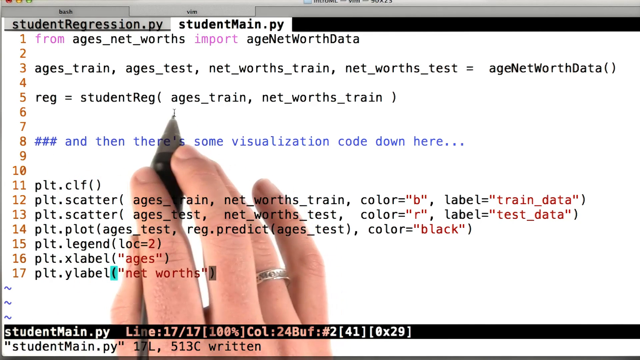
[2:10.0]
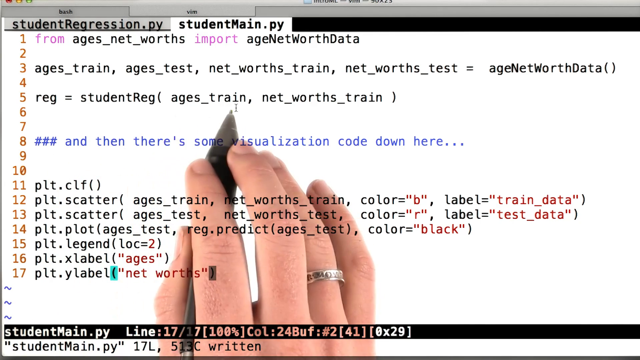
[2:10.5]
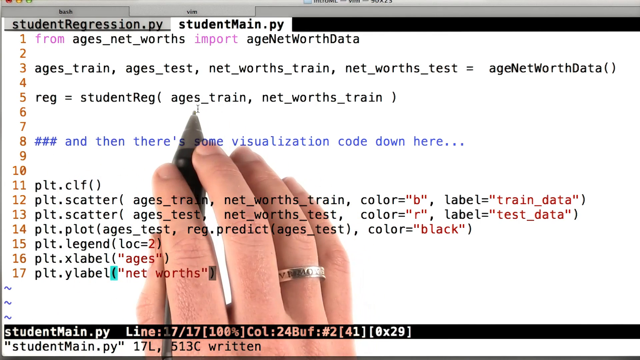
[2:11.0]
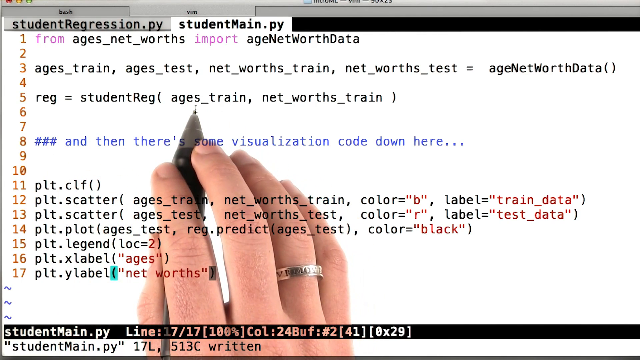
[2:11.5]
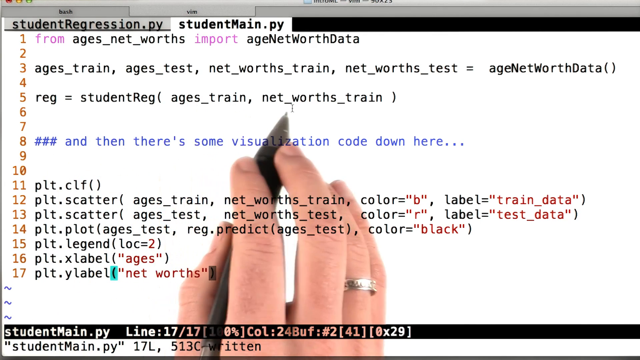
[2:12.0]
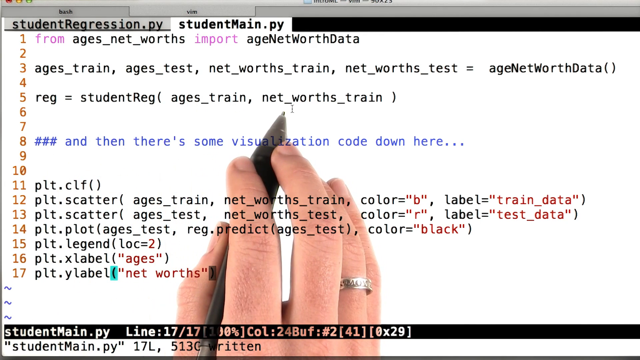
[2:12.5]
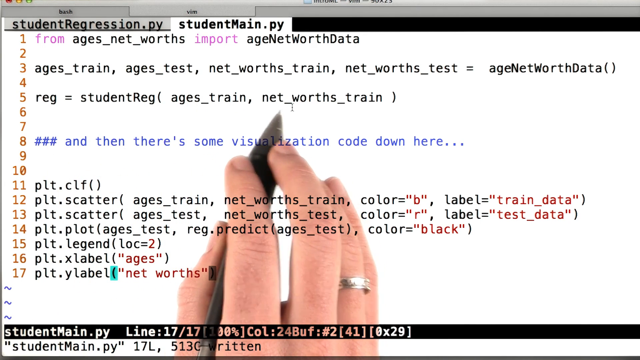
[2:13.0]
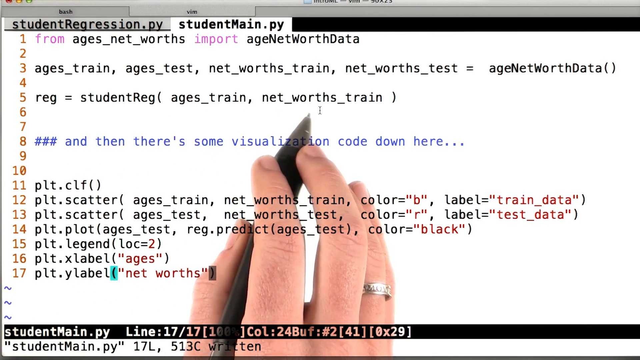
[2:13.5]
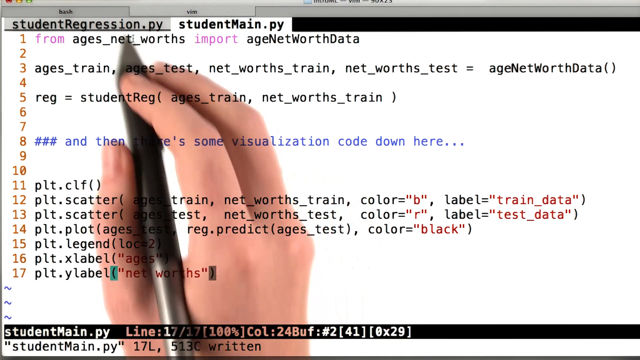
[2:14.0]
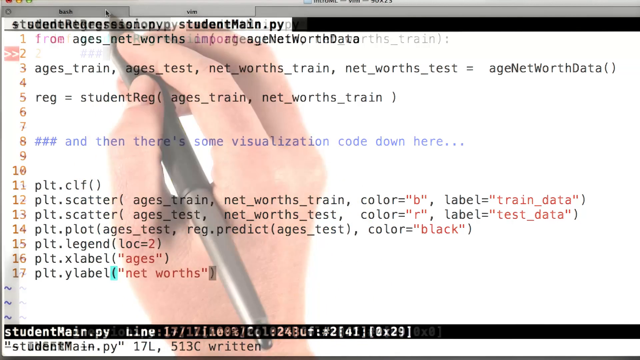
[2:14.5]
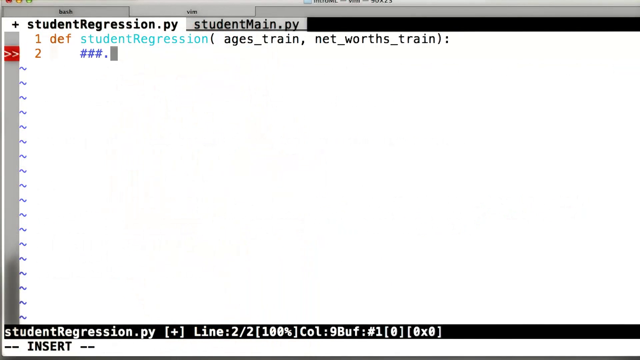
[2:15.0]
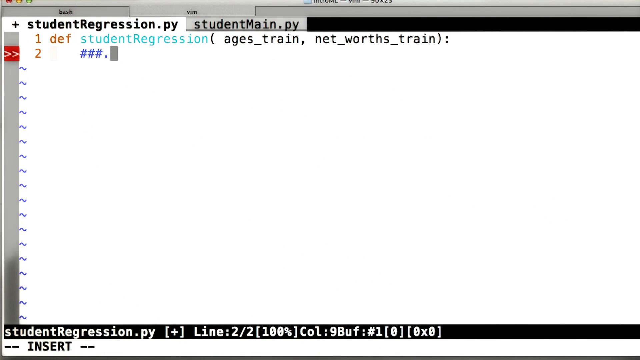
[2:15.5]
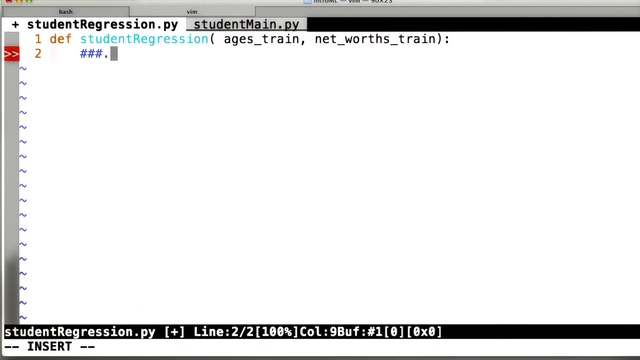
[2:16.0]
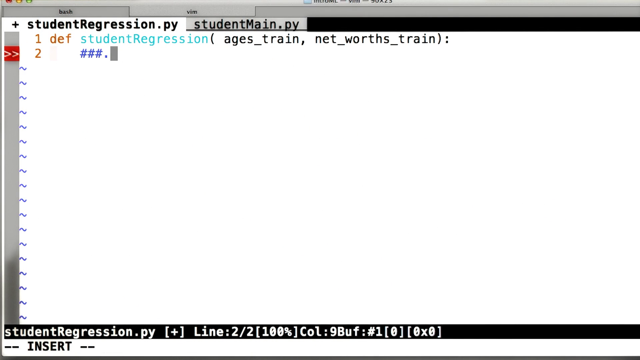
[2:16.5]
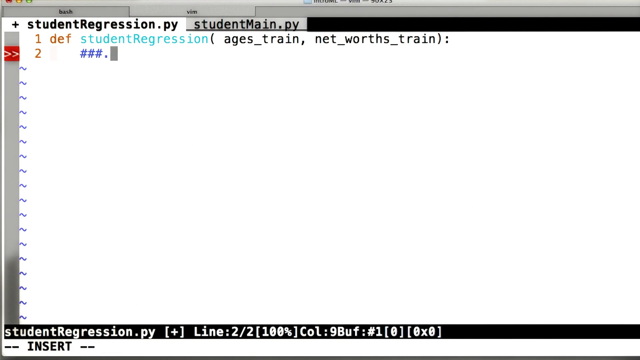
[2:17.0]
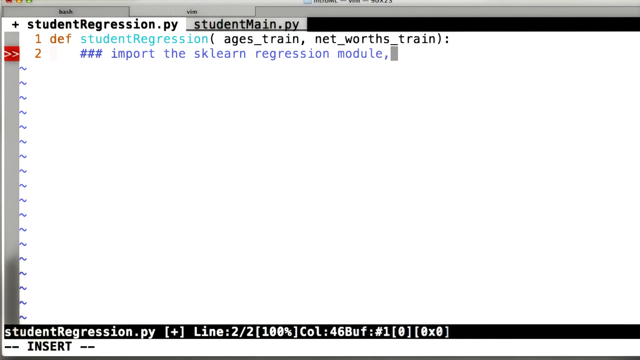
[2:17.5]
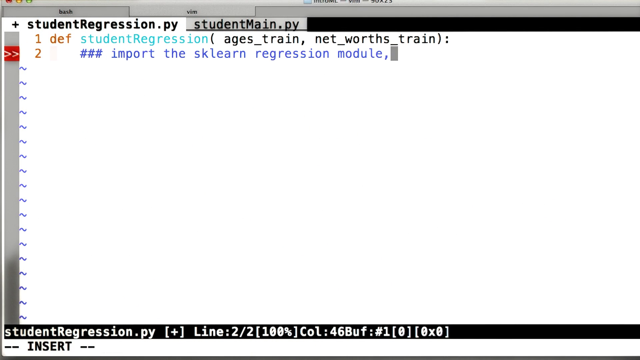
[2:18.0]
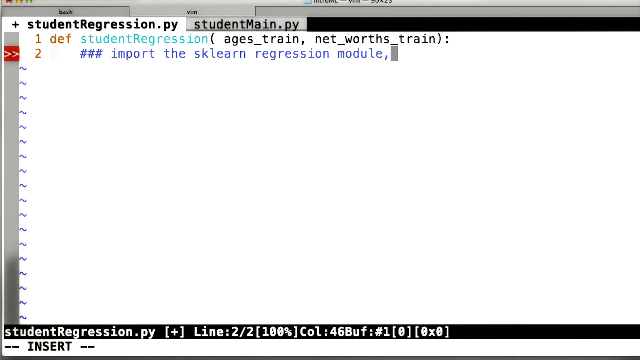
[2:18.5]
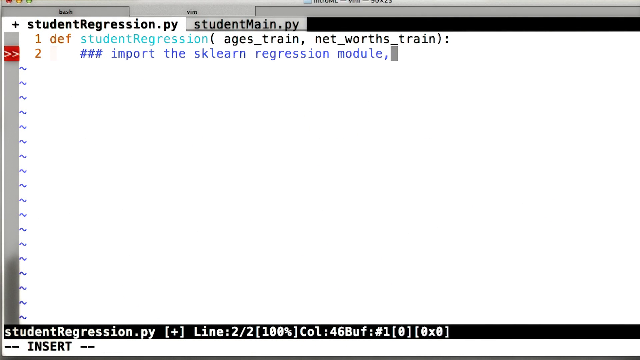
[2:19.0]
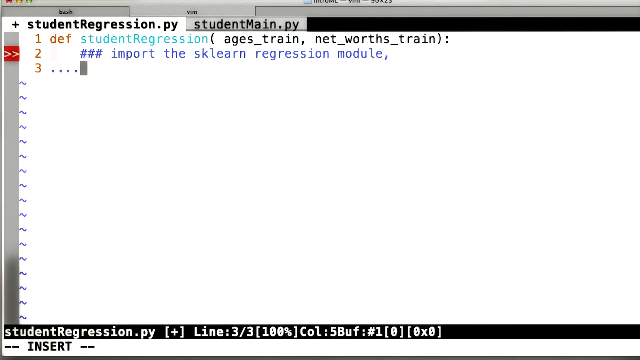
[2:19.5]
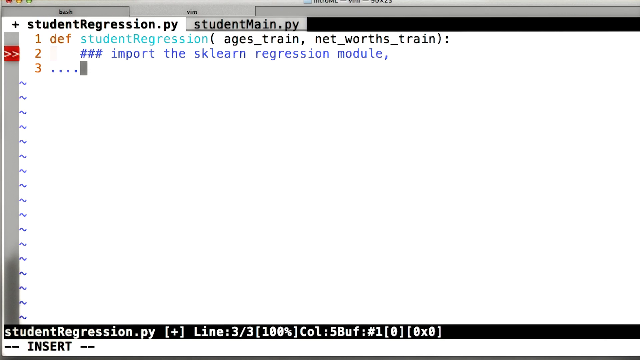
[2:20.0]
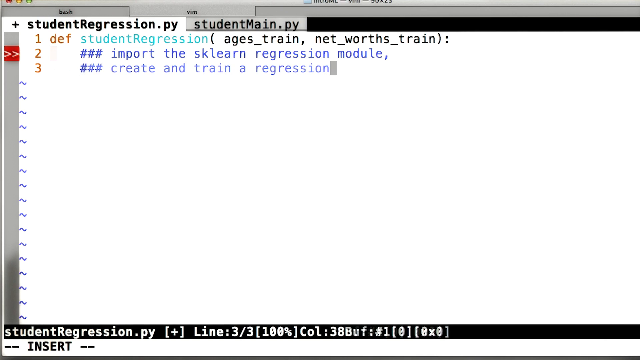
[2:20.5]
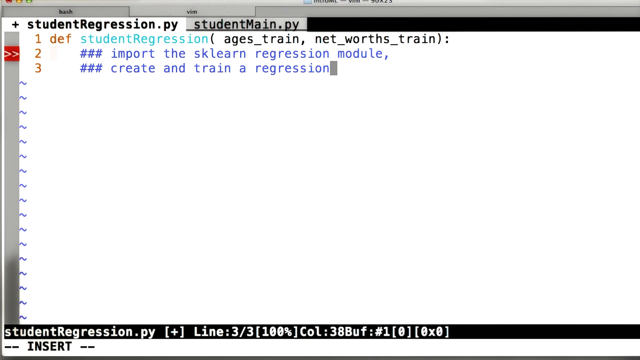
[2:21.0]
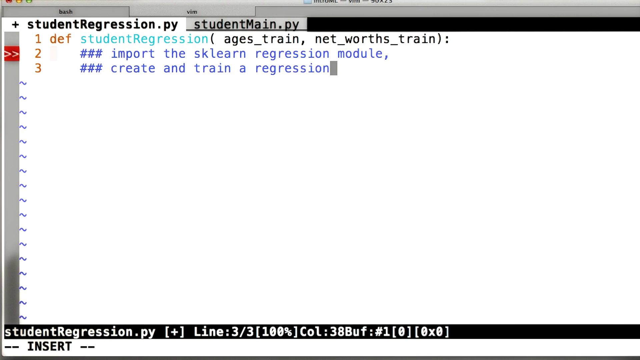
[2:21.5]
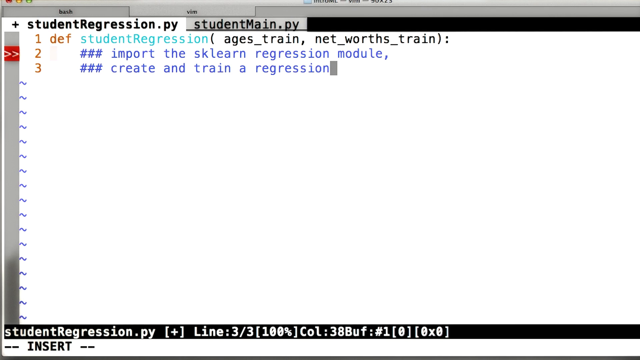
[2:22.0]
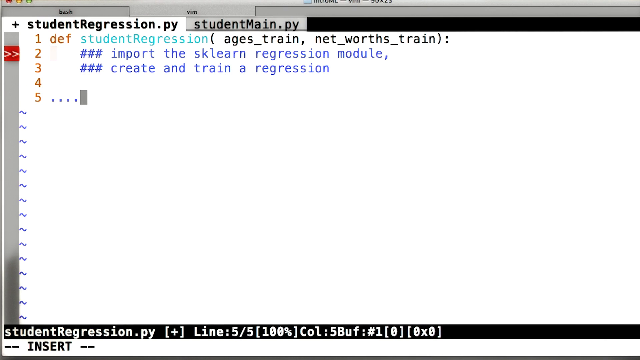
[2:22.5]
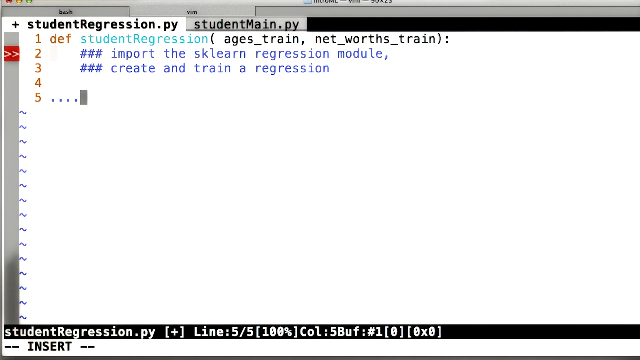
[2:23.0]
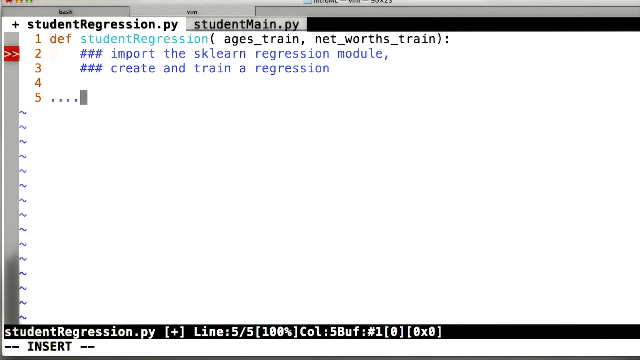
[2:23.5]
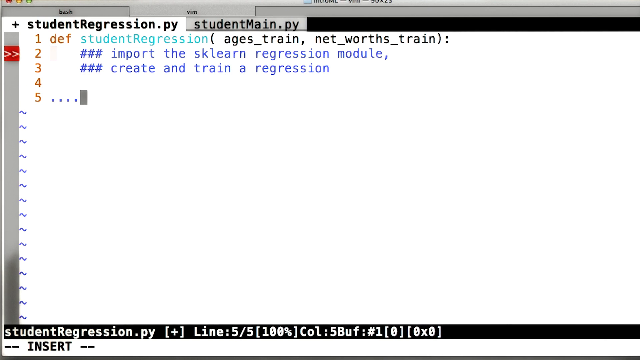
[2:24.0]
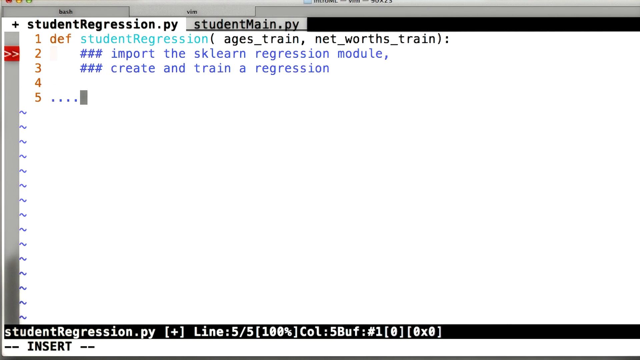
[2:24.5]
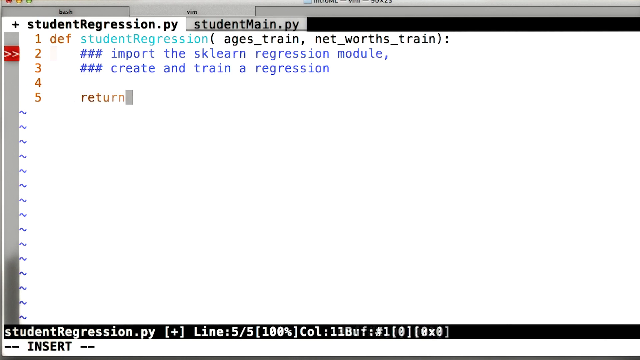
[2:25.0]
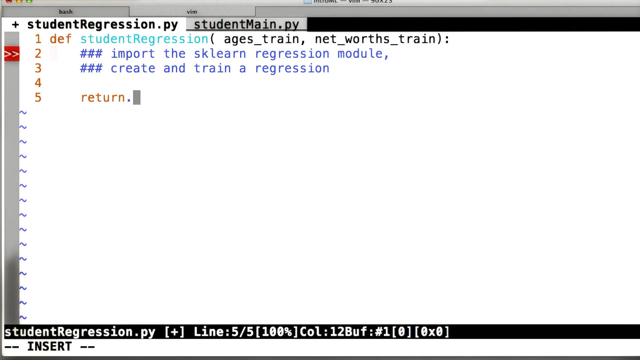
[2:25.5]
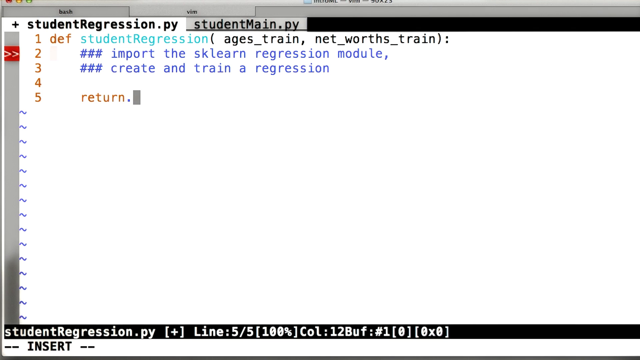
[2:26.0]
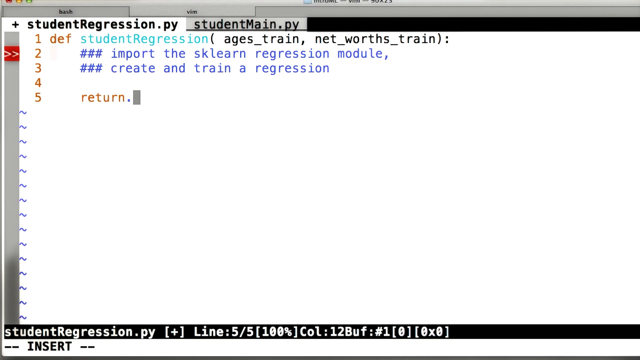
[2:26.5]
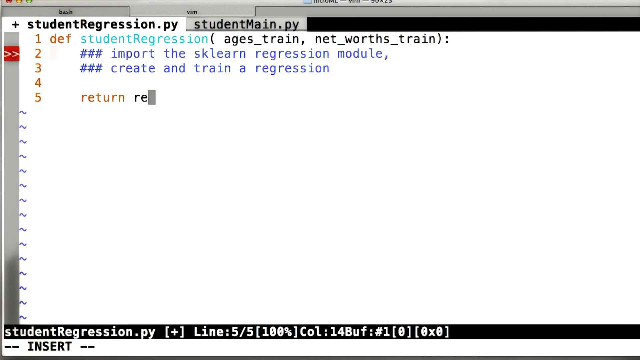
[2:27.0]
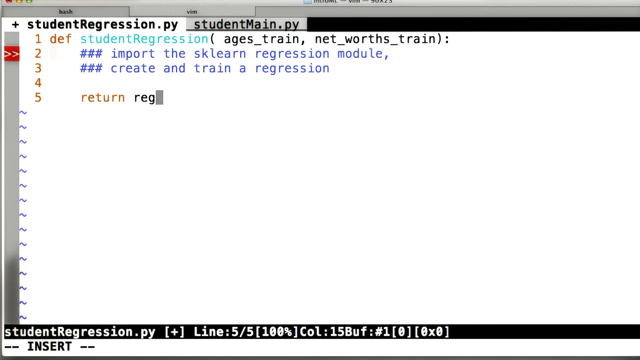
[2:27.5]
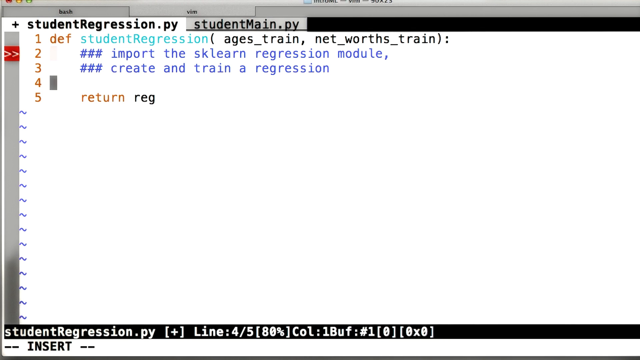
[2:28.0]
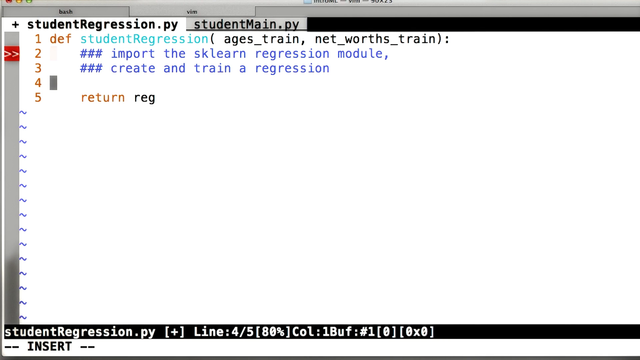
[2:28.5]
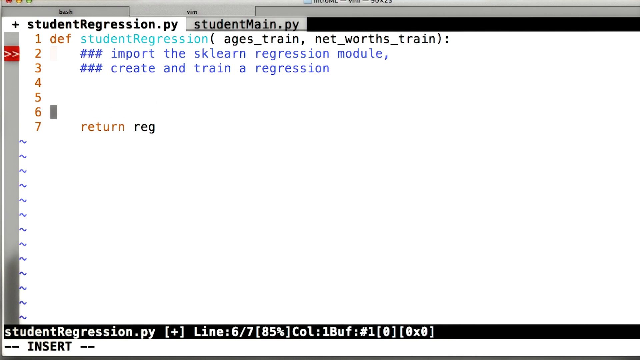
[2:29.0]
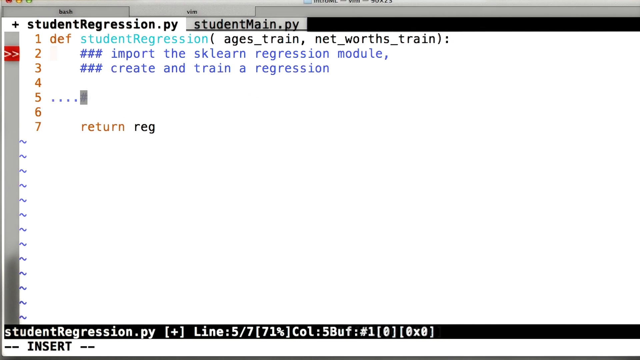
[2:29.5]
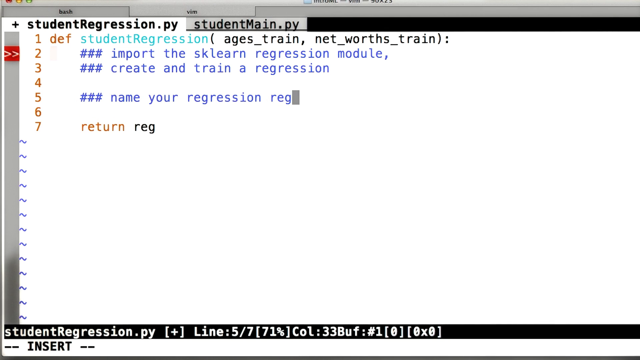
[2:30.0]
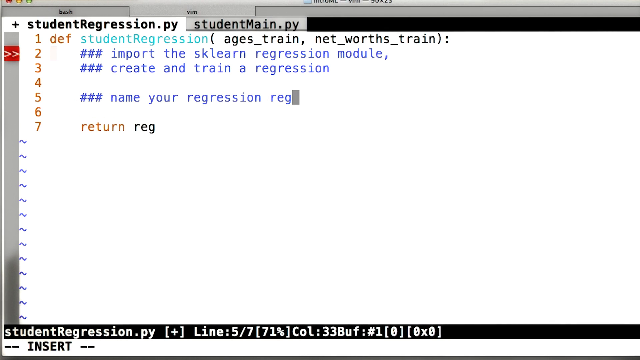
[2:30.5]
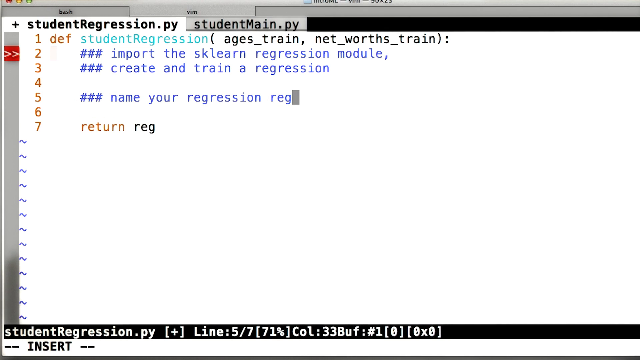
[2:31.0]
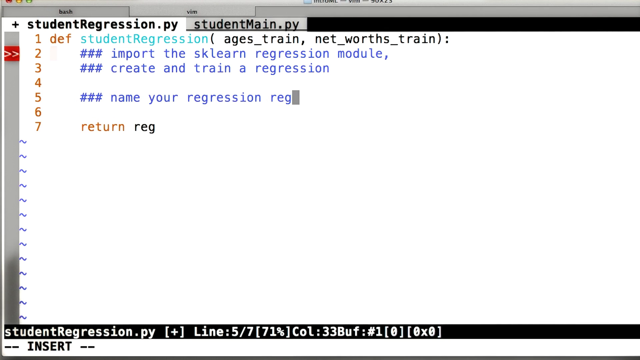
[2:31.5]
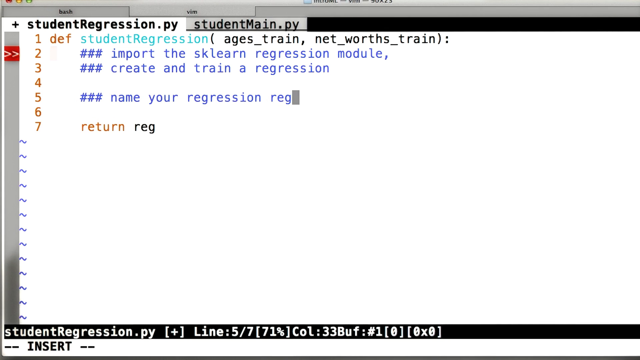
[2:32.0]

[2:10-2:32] The instructor underlines a couple of variables in student main.py, mainly ages train and net worths train under student reg. The view then moves to the student regression.py file, where the instructor's notes read "import the sklearn regression model" and "create and train a regression". A comment in the file says "name your regression reg".